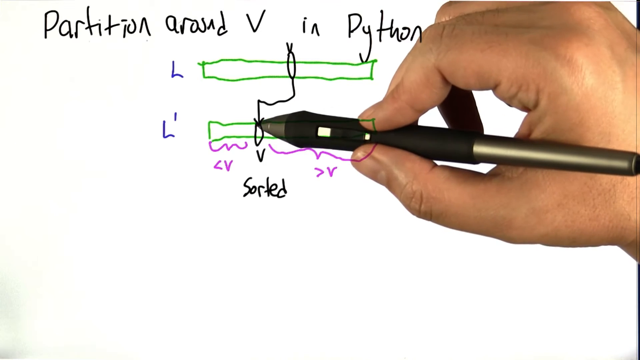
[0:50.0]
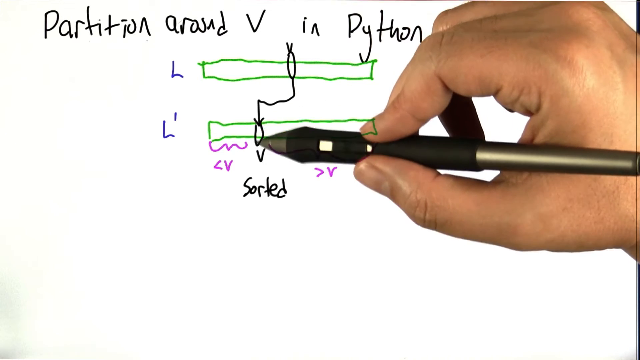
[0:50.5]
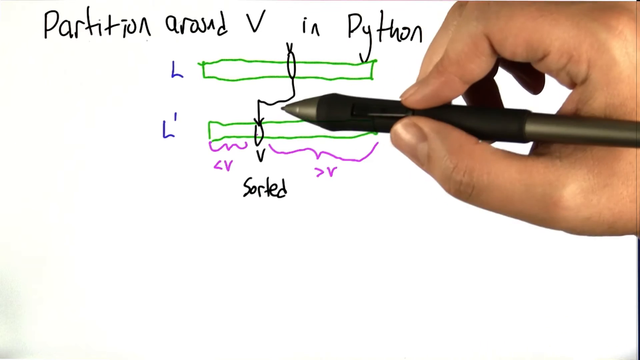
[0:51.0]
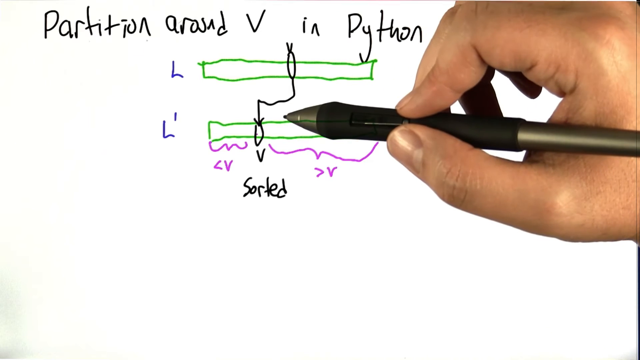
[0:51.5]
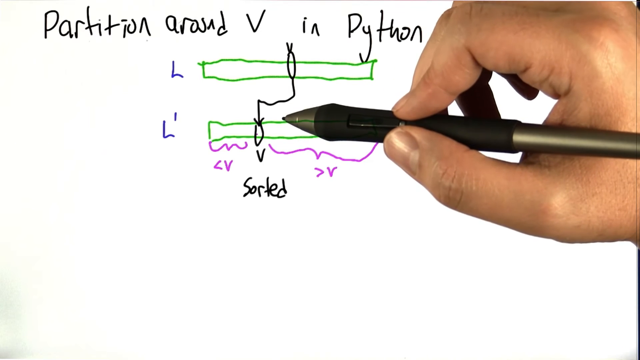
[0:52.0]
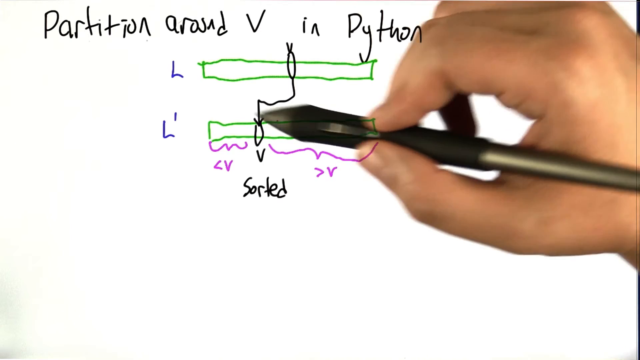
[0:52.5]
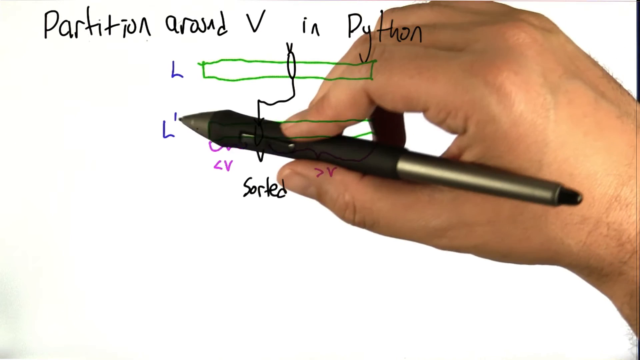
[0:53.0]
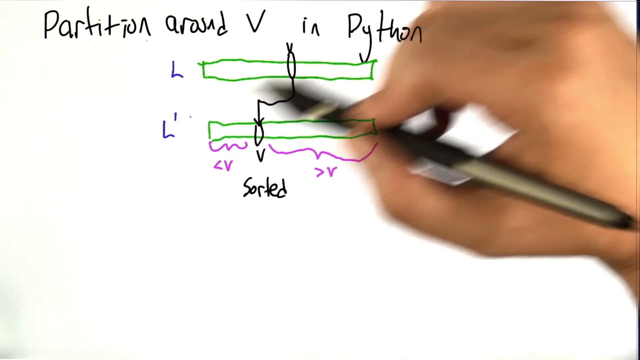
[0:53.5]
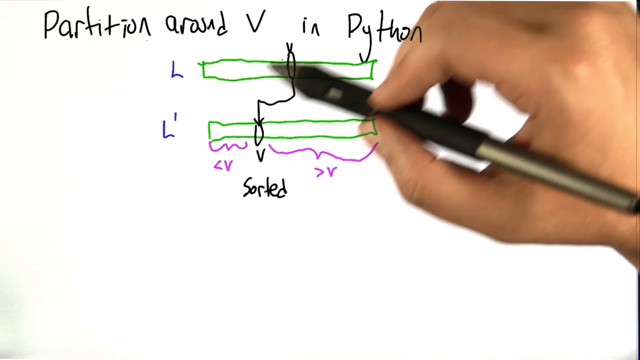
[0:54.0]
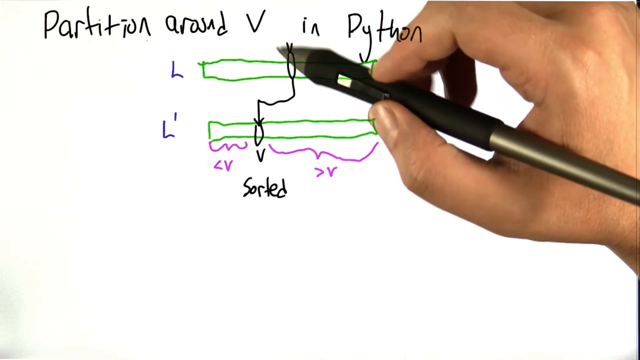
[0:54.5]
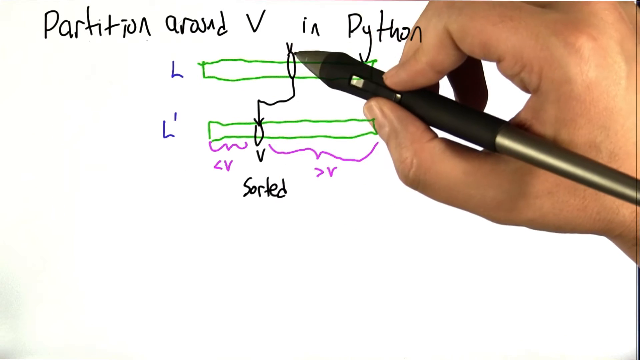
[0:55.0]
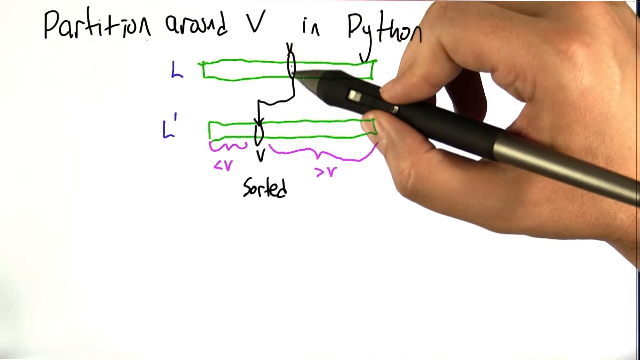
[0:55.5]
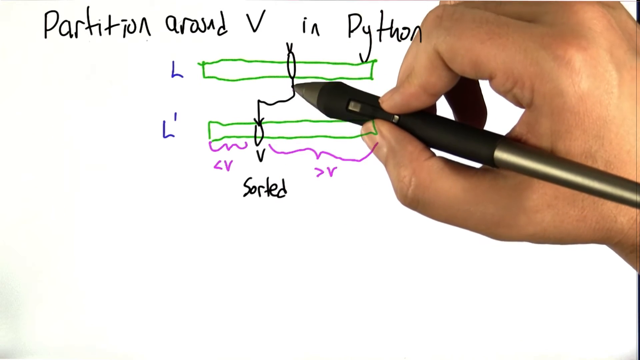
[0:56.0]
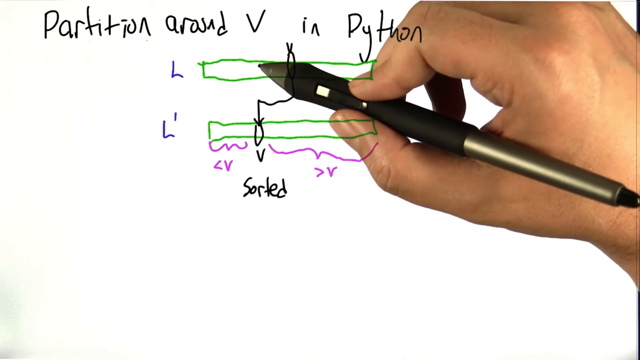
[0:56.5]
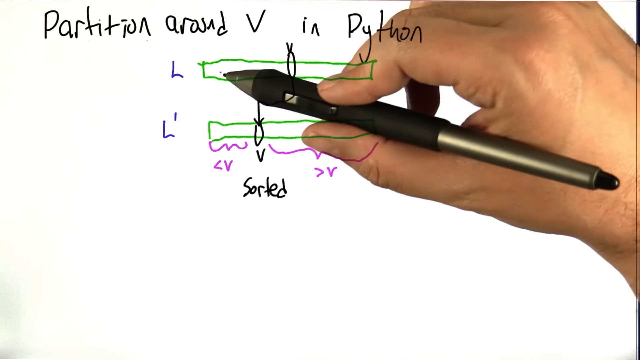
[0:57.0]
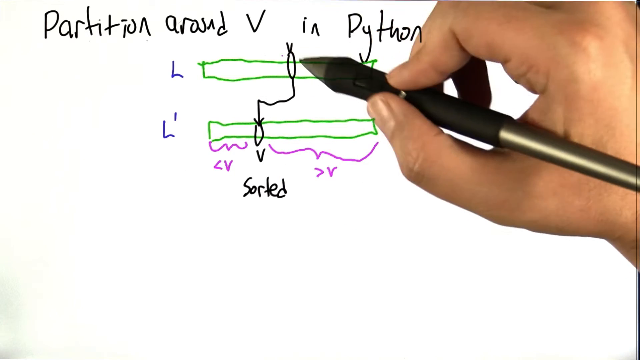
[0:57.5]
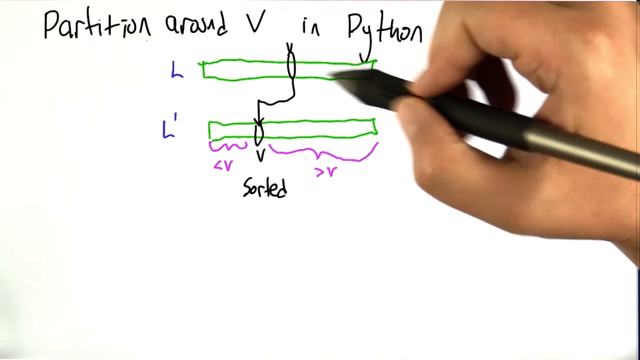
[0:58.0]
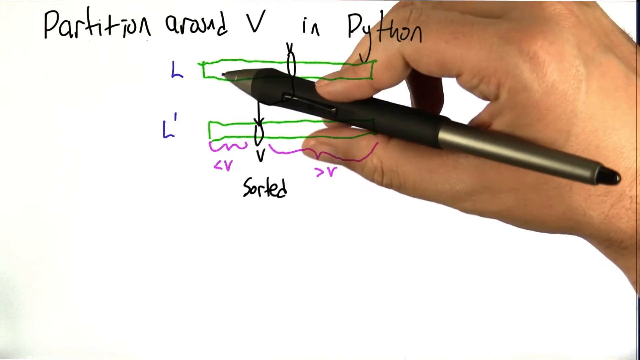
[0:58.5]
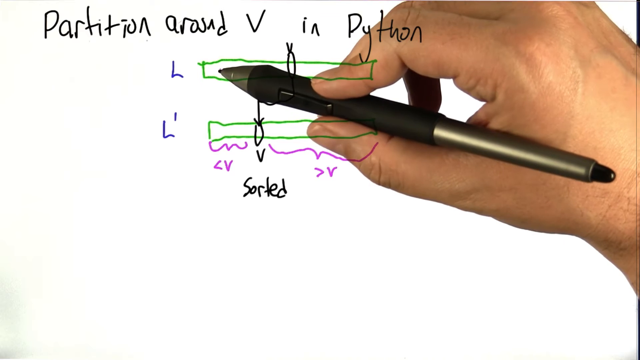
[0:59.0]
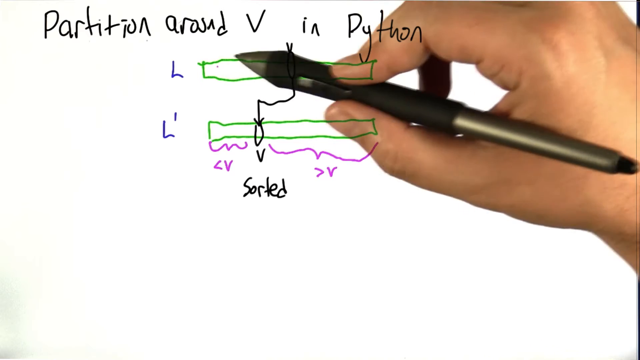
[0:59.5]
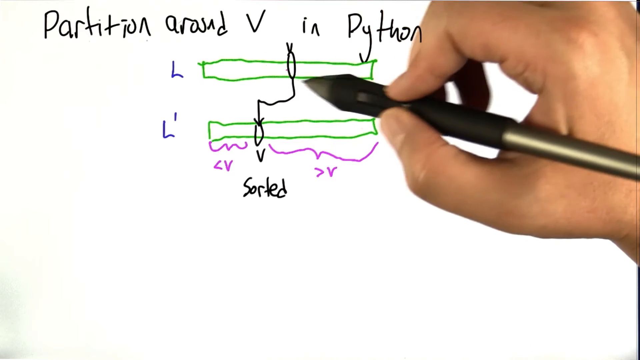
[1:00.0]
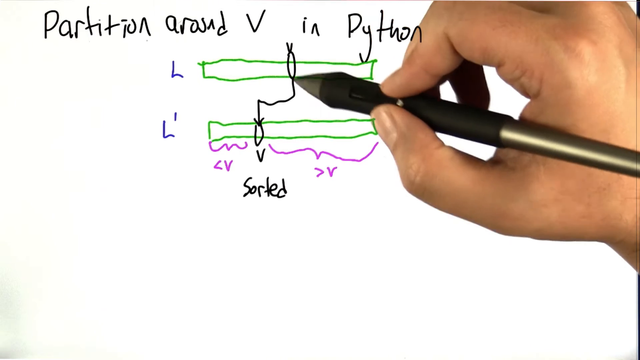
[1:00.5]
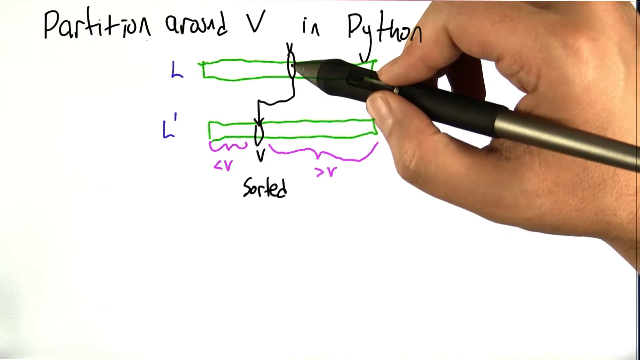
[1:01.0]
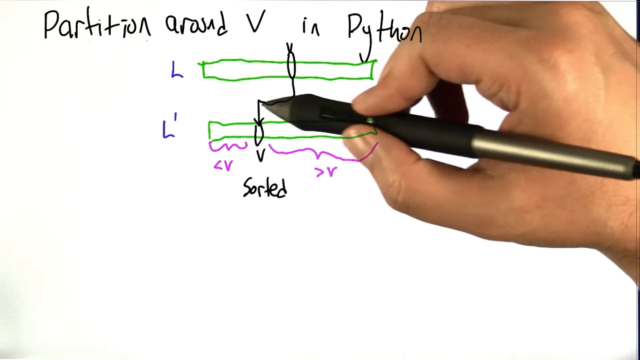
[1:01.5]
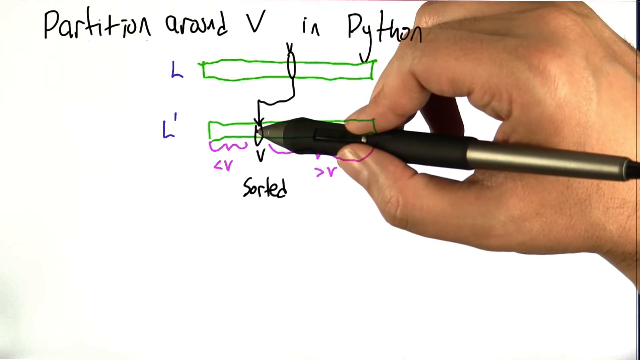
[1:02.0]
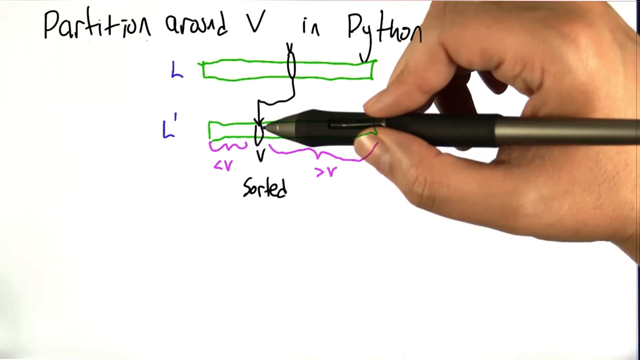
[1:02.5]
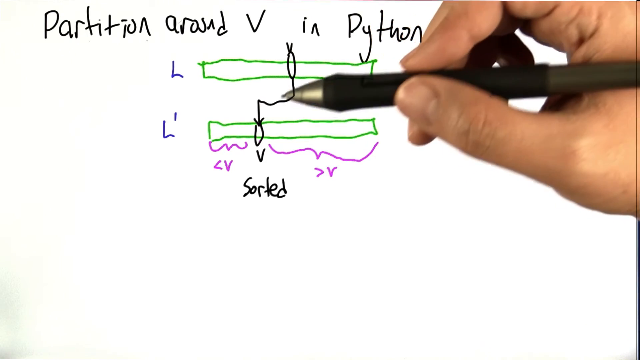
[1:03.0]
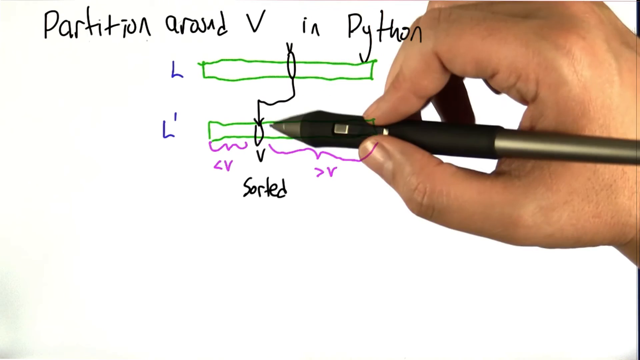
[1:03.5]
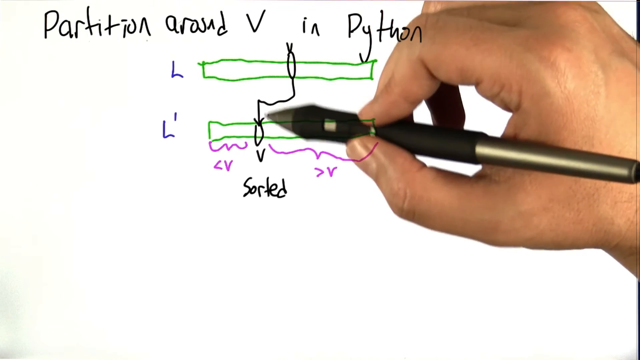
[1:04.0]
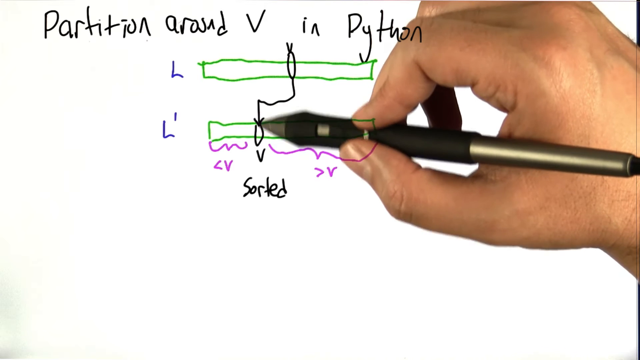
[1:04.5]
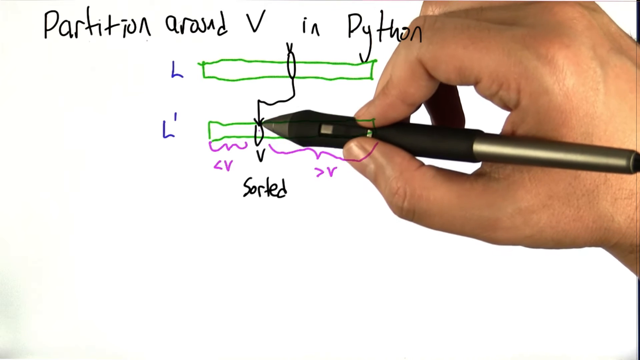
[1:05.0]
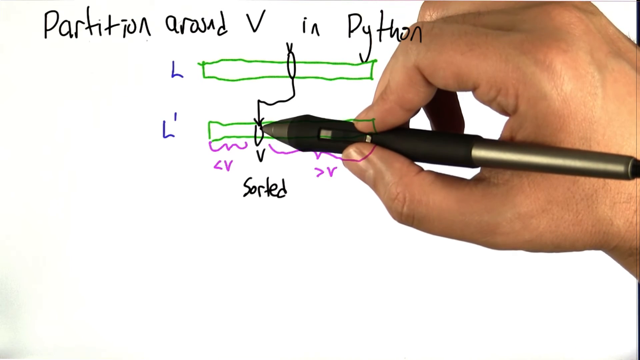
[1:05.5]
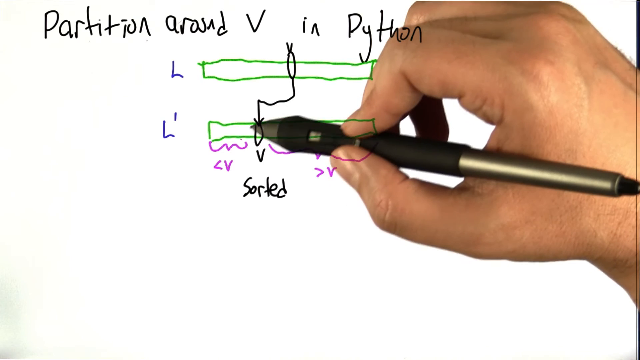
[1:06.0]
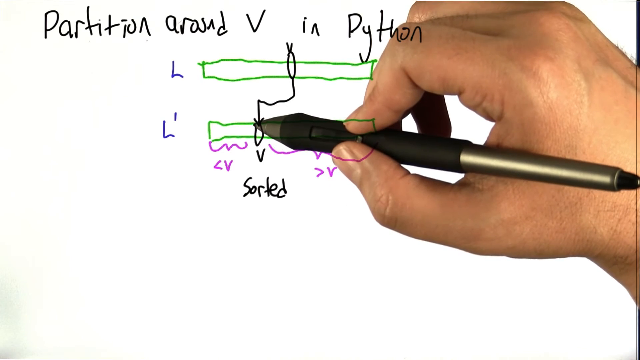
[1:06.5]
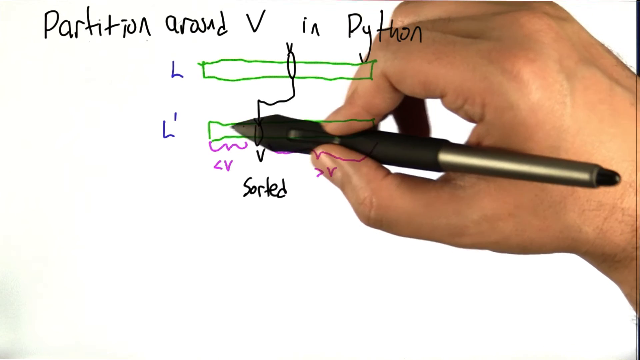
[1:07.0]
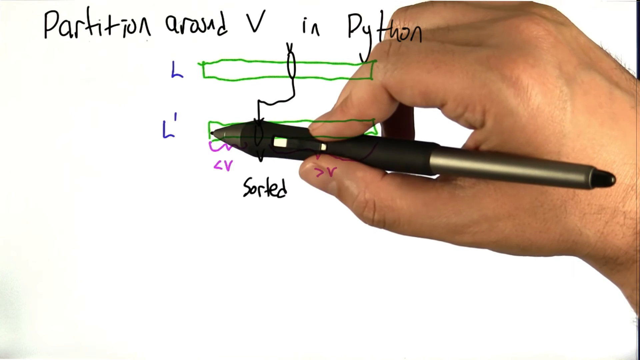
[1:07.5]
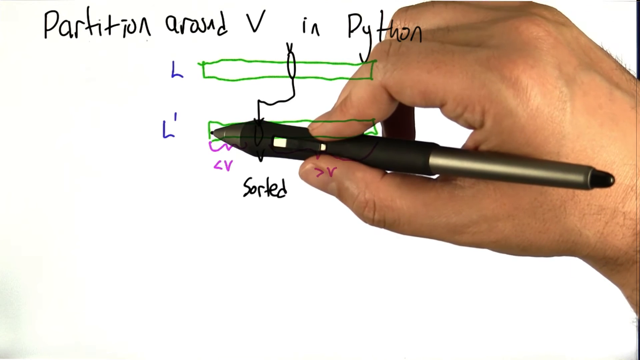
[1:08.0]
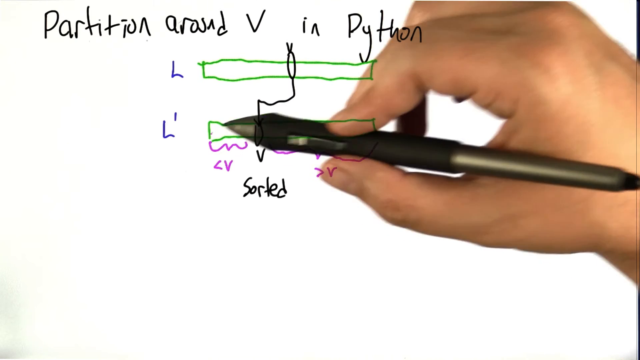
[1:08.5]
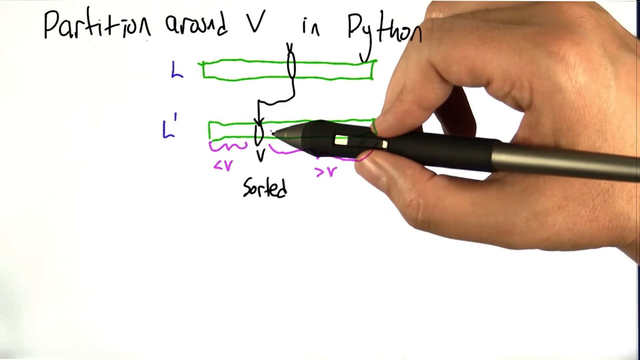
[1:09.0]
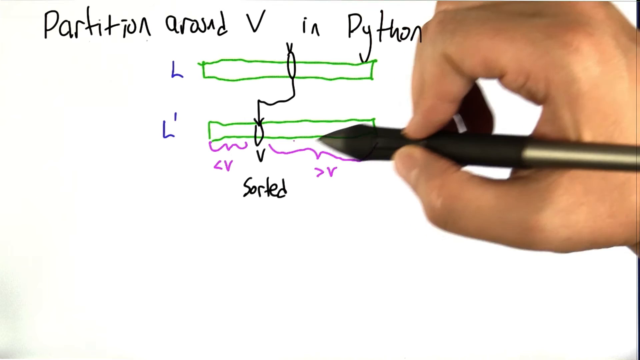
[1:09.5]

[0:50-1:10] A hand holding a pen is on the screen over a drawing. At the top it reads "partition around V in Python". Beneath it is a blue L with a green rectangle next to it, and under that another blue L next to another green rectangle. There is a circle in the middle of the green rectangle next to L, and another circle about 30% of the way into the L apostrophe rectangle, with lines connecting the two circles. Under the L apostrophe rectangle, the part before the circle is labeled "less than V" and the part to the right of the circle is labeled "greater than V". The two circles also have a label that reads "sorted". The hand points at the L apostrophe circle, then at the L apostrophe, then at the L circle, probably explaining what the circles and the green rectangles mean.